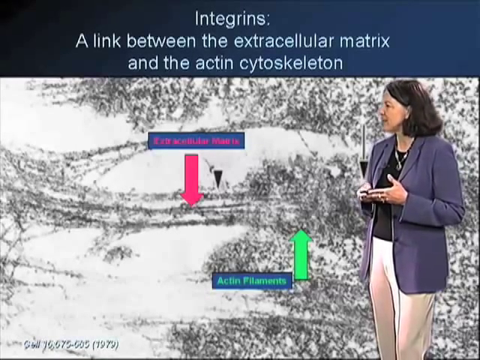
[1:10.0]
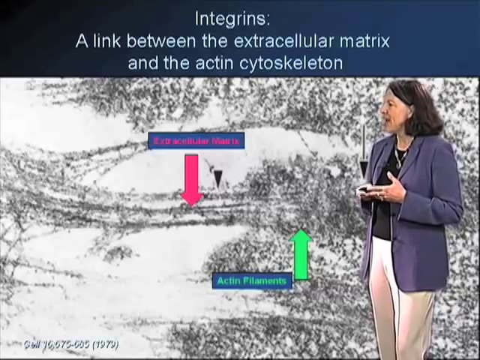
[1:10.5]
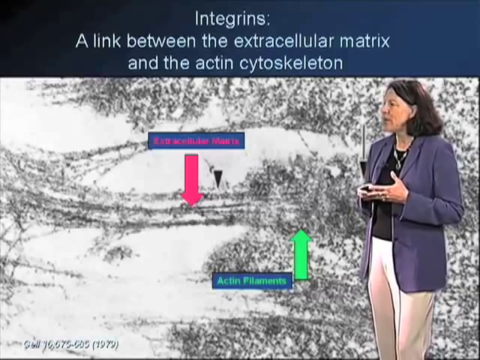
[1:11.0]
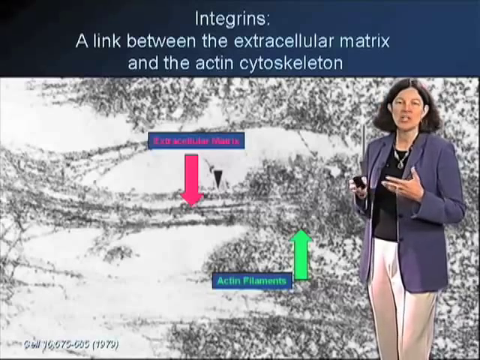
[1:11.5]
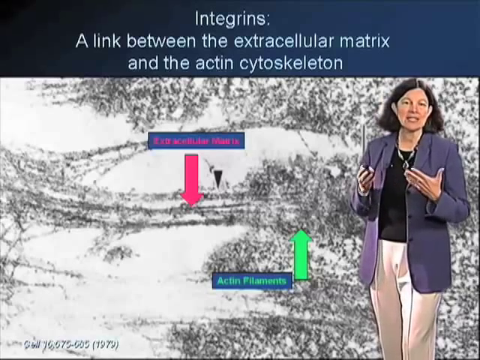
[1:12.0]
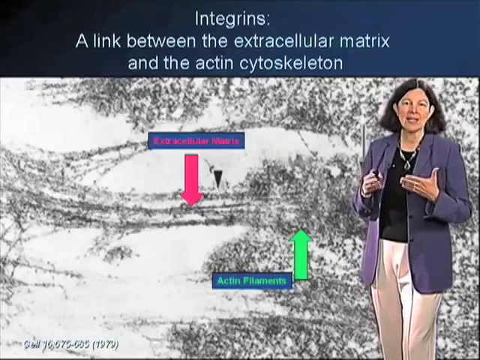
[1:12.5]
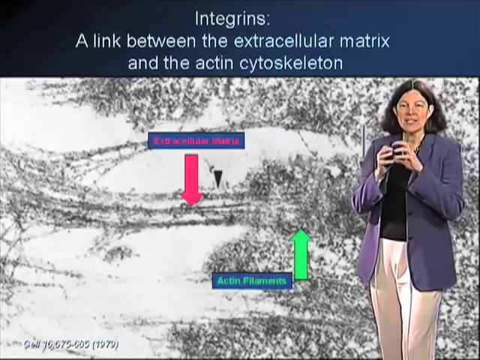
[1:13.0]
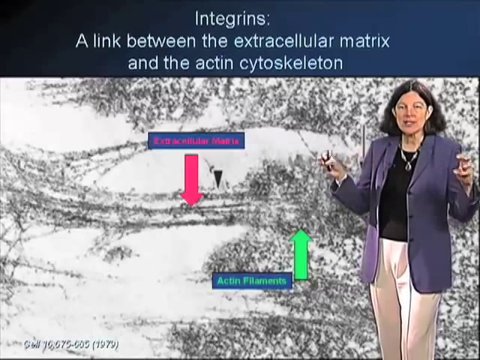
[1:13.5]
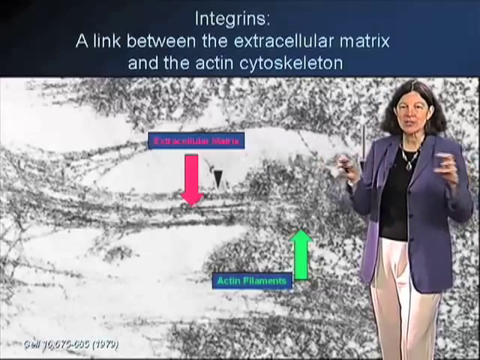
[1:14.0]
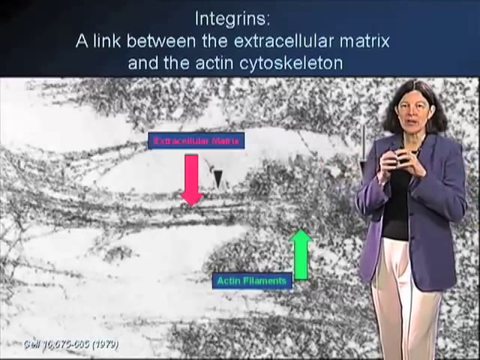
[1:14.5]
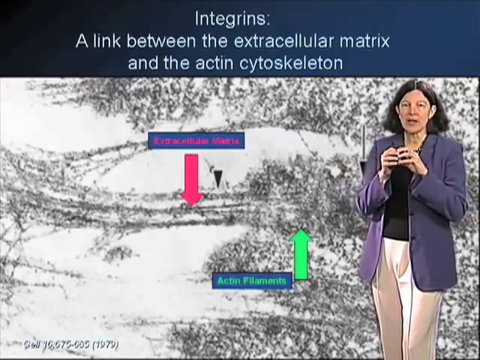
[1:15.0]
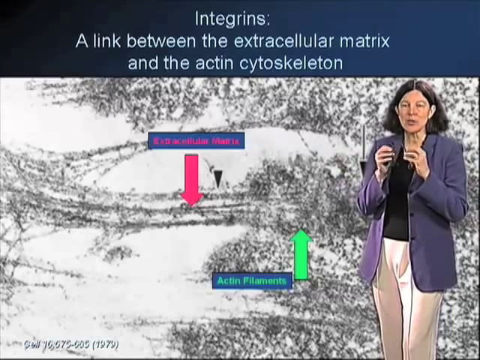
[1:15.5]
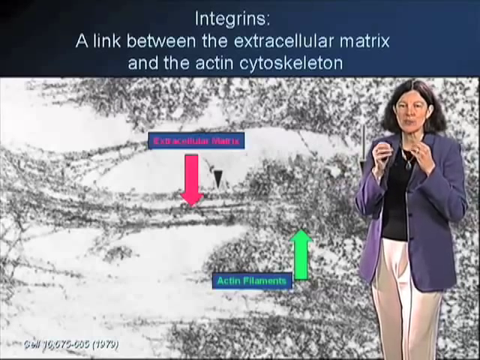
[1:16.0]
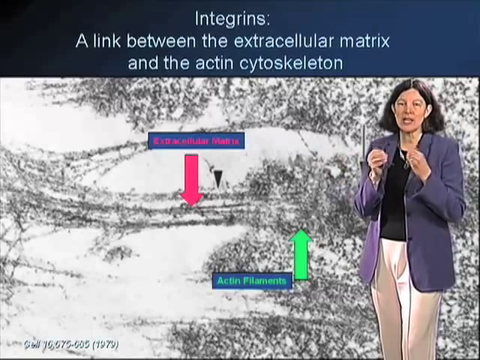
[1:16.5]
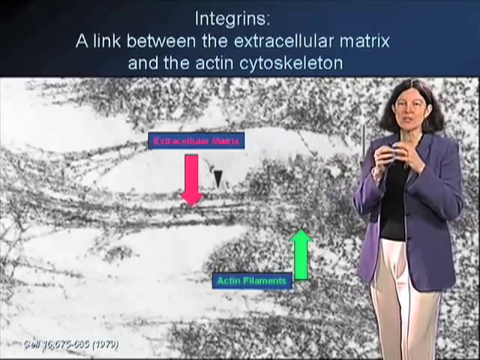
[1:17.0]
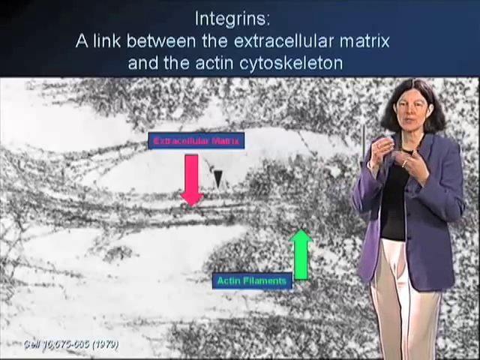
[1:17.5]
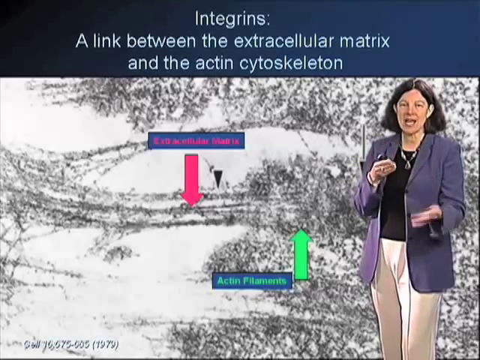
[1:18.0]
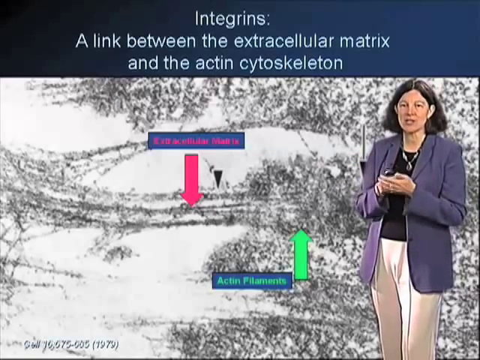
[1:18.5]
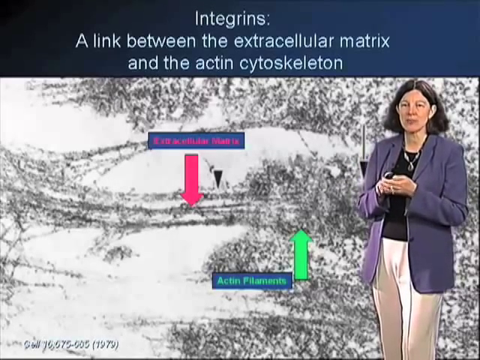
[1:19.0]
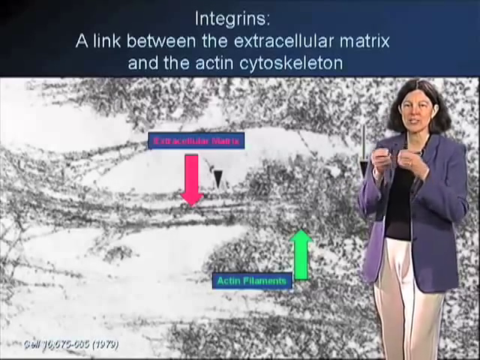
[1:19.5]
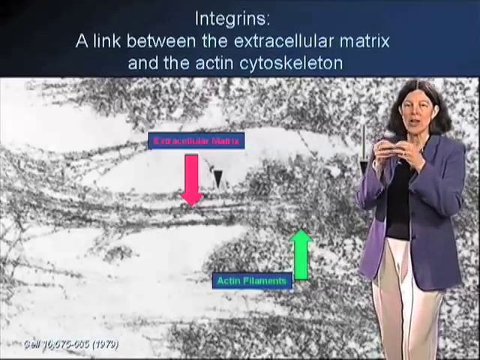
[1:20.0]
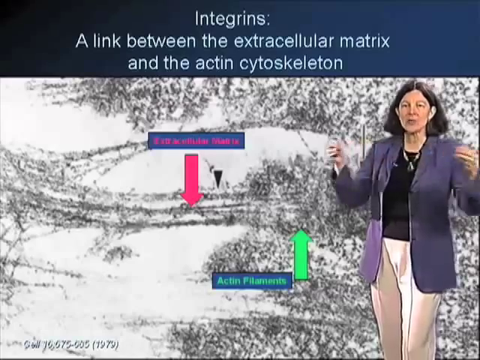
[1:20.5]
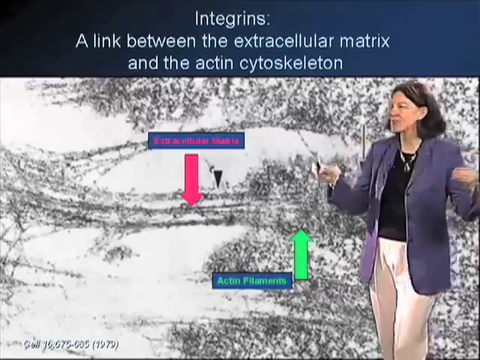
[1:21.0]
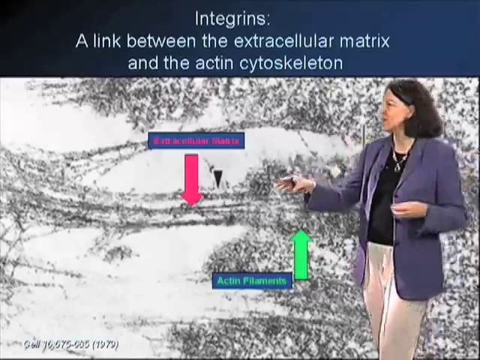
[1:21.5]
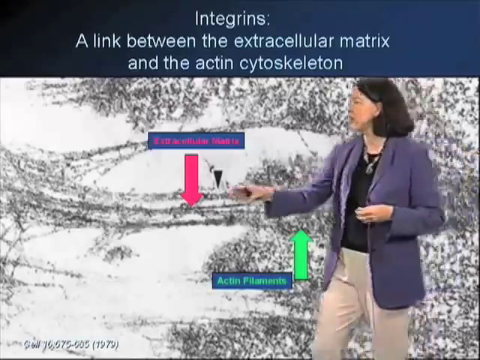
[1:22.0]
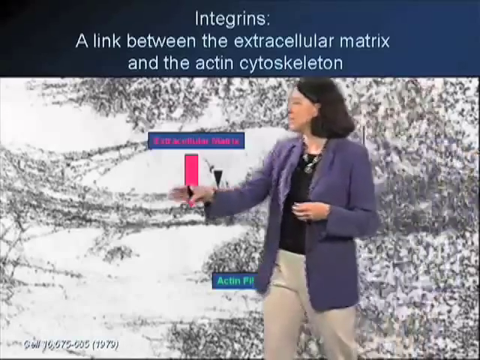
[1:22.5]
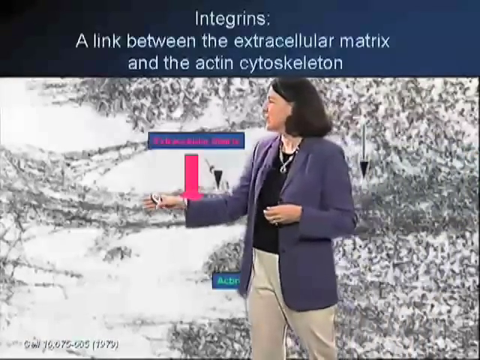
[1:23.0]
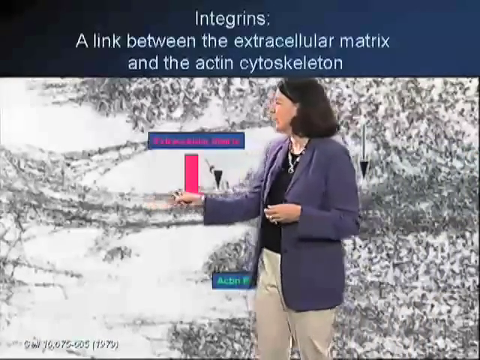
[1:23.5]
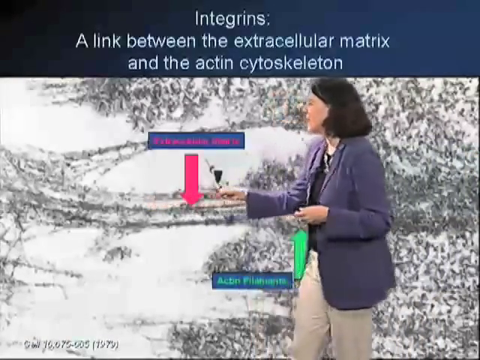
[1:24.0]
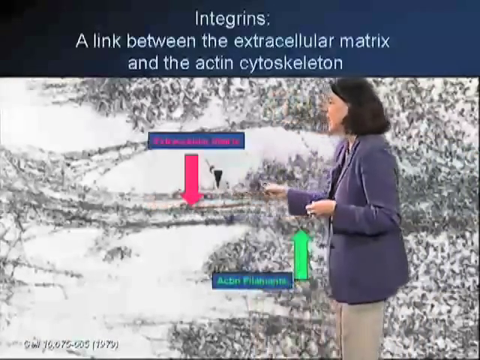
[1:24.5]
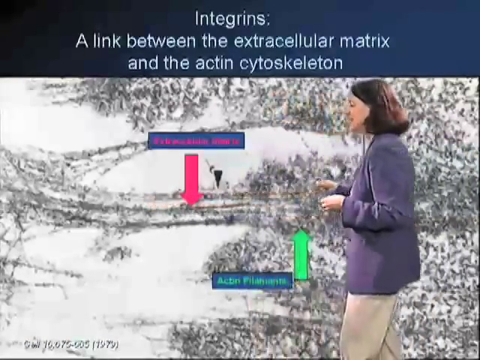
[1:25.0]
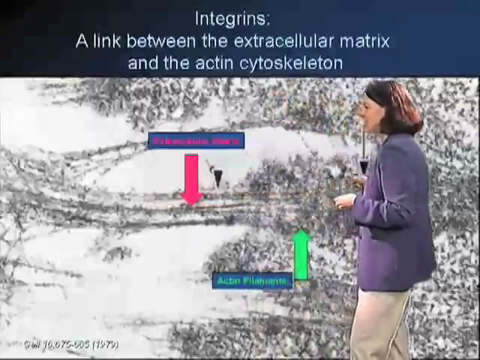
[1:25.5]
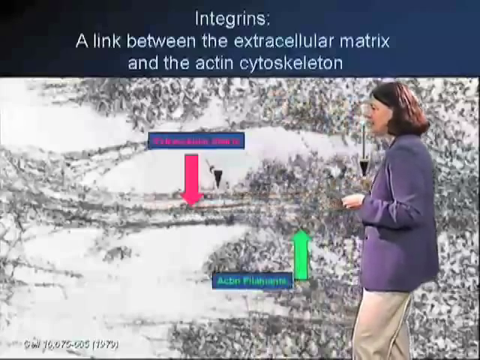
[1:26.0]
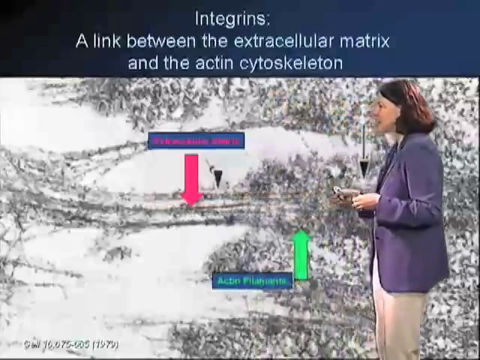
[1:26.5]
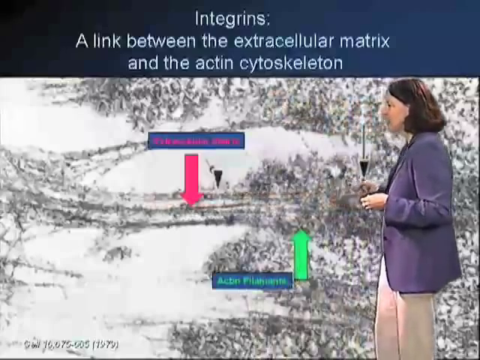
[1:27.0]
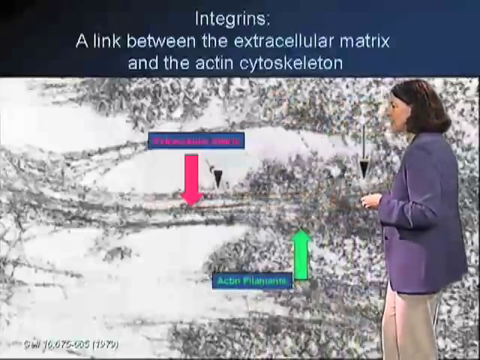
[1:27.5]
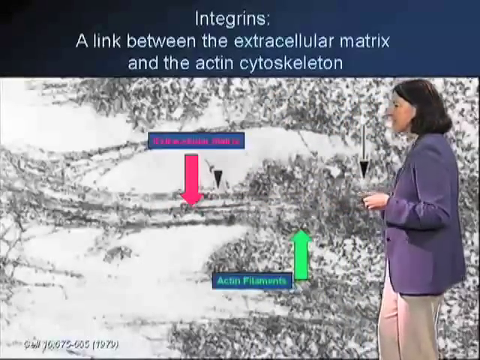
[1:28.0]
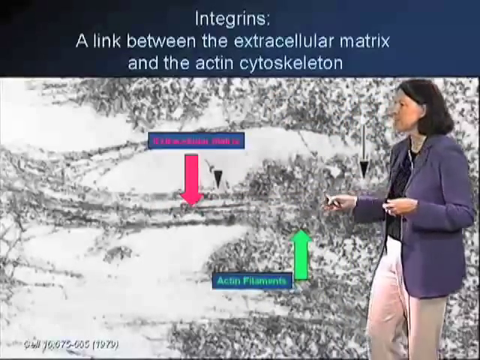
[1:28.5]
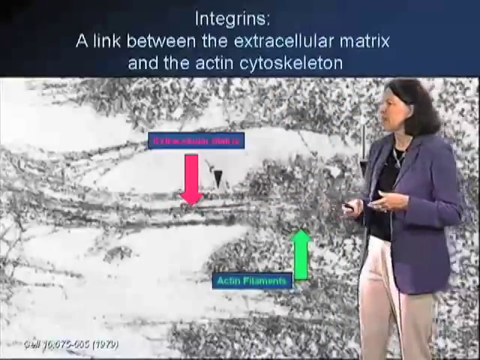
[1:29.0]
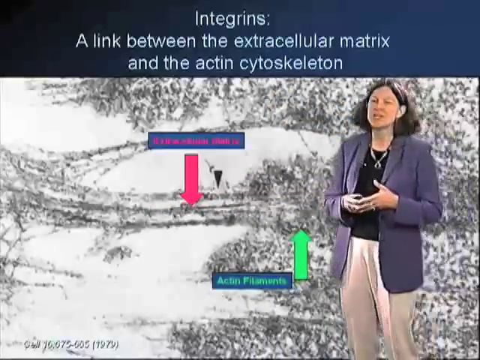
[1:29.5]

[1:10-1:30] A woman stands to the right of the screen, and behind her is what appears to be a presentation. At the top is a description of integrins as a link between the extracellular matrix and the actin cytoskeleton. A large diagram uses green and pink arrows pointing to specific parts of it, along with labels for what those arrows represent. The woman gestures with her hands in an almost pulling or stretching motion and points to specific parts of the diagram. She holds a clicker in her right hand the entire time. She walks slightly toward the center of the screen to show one specific part, speaking toward the camera or toward the background throughout.